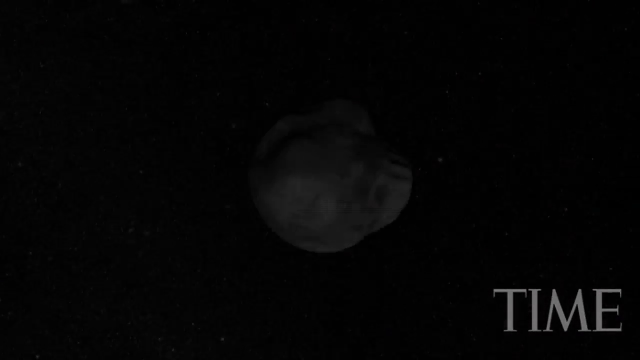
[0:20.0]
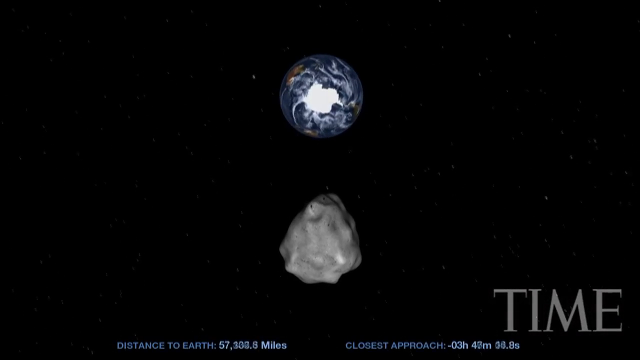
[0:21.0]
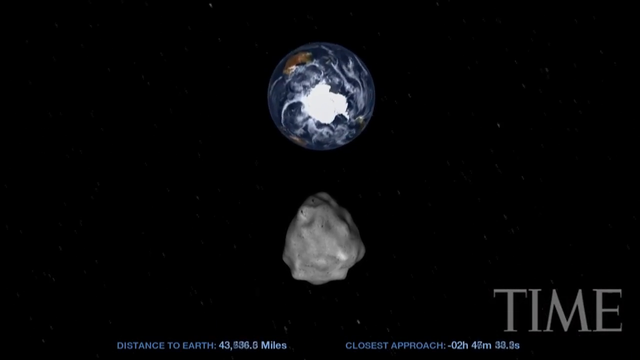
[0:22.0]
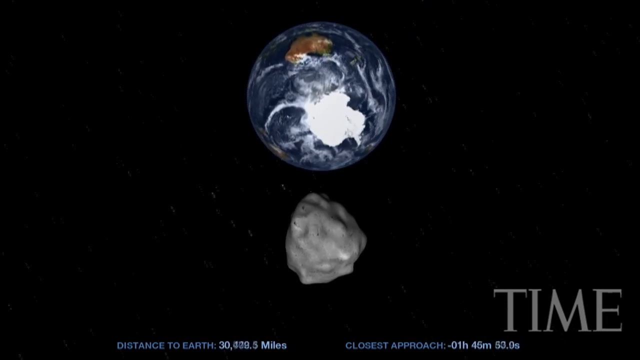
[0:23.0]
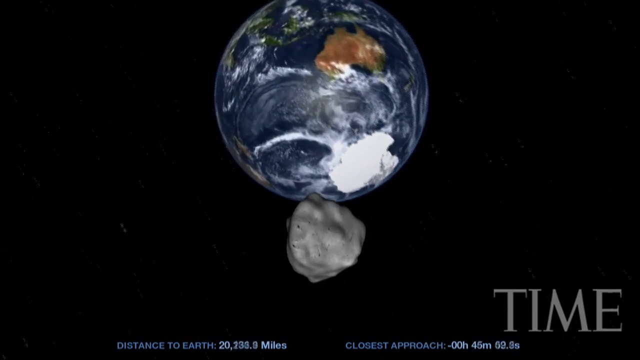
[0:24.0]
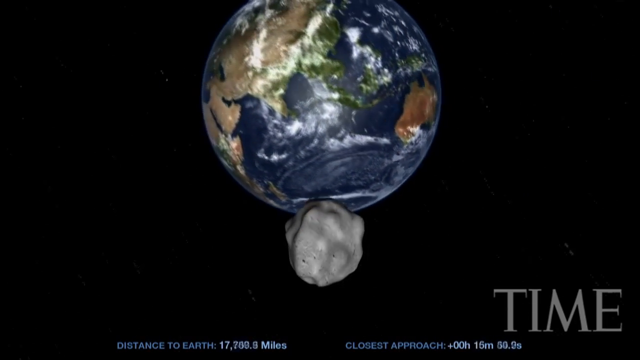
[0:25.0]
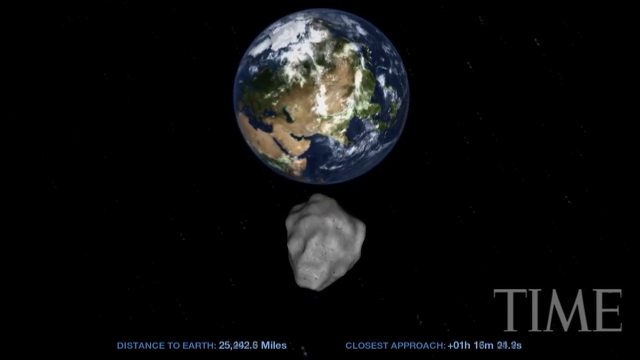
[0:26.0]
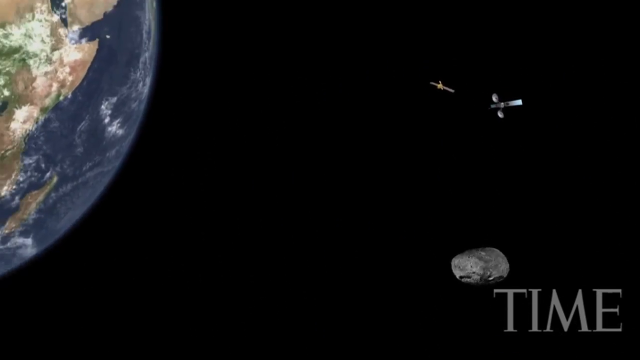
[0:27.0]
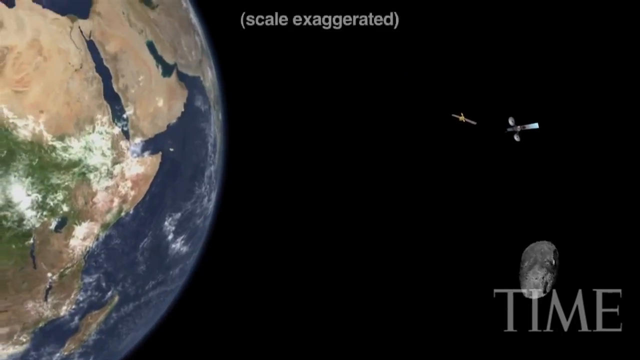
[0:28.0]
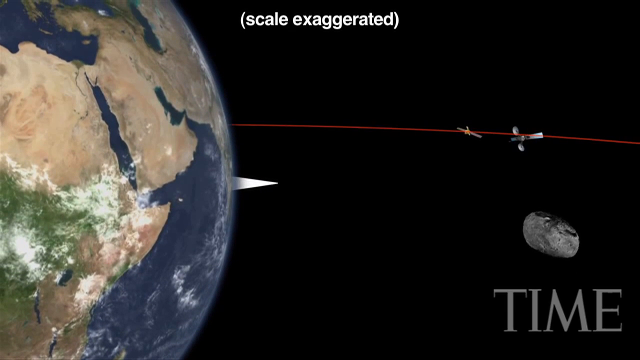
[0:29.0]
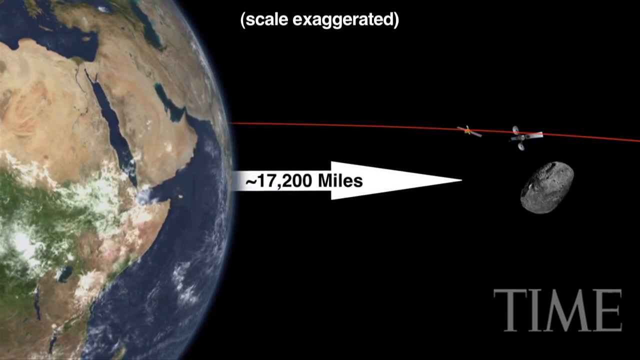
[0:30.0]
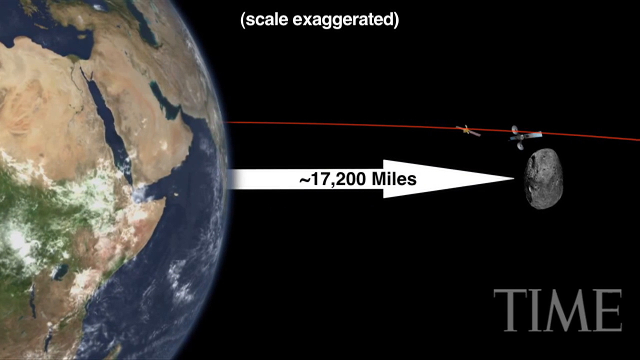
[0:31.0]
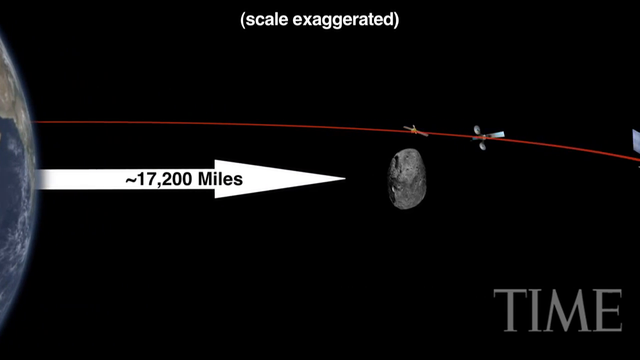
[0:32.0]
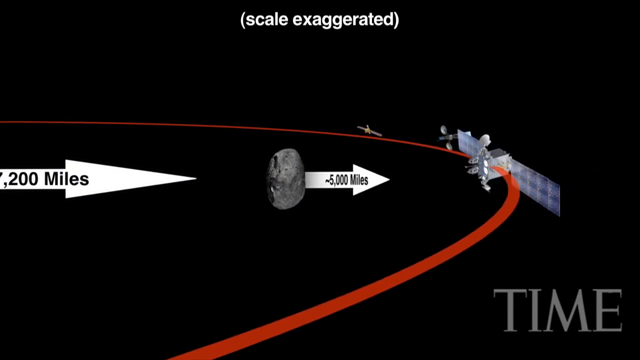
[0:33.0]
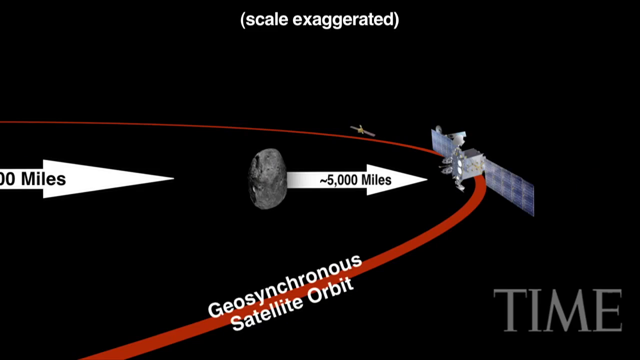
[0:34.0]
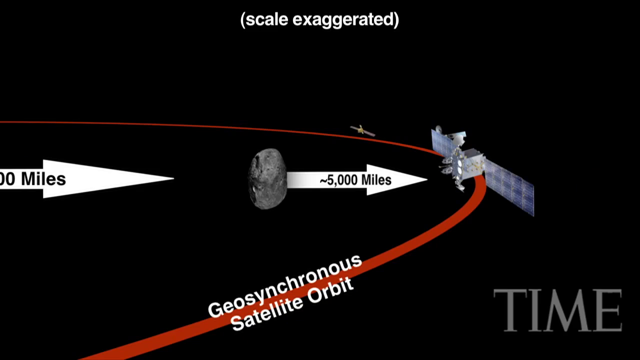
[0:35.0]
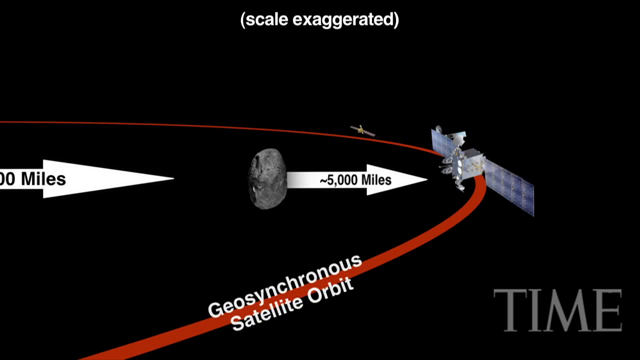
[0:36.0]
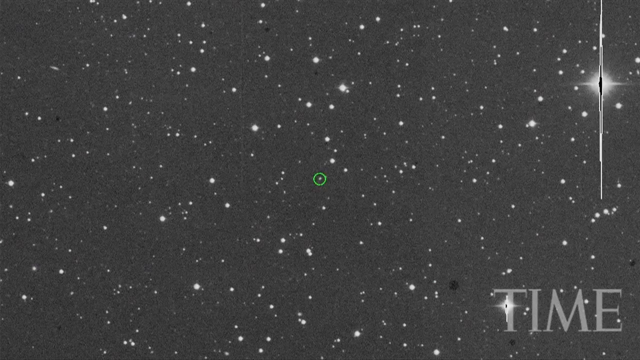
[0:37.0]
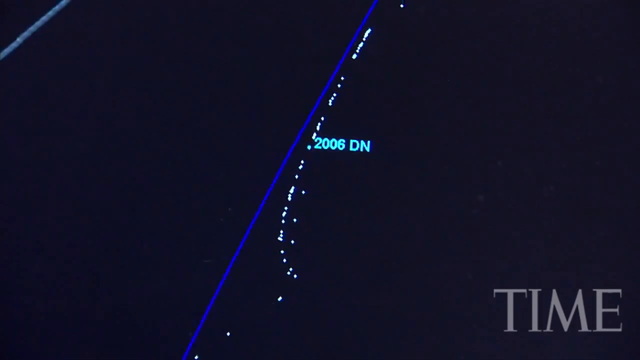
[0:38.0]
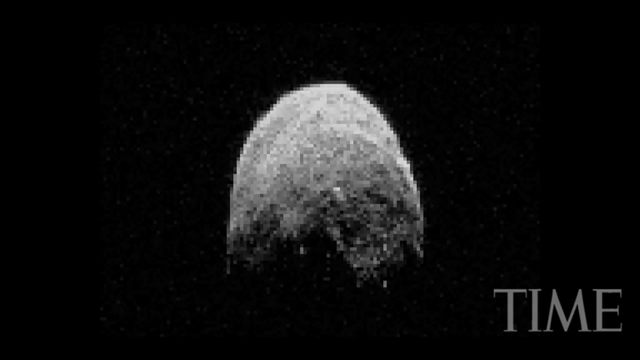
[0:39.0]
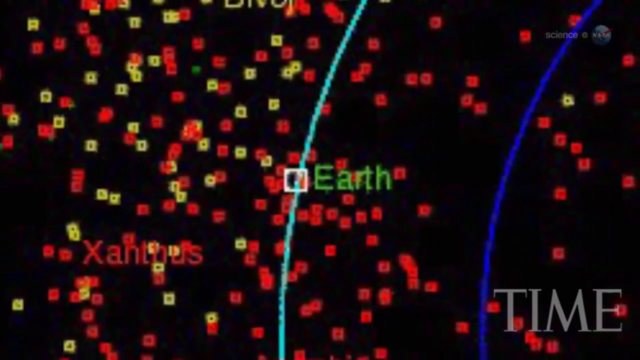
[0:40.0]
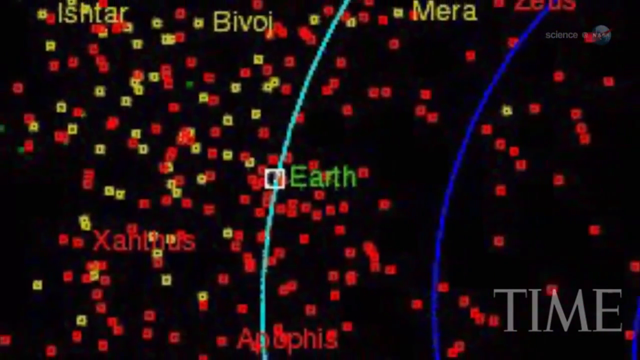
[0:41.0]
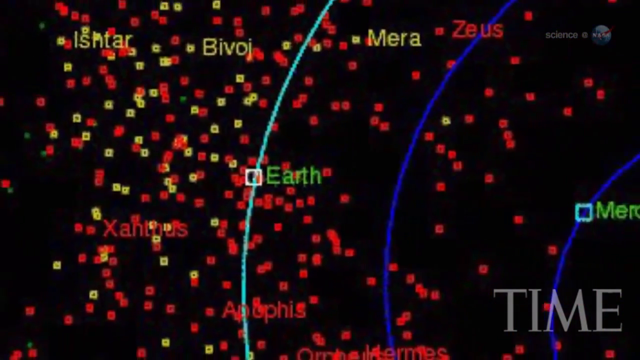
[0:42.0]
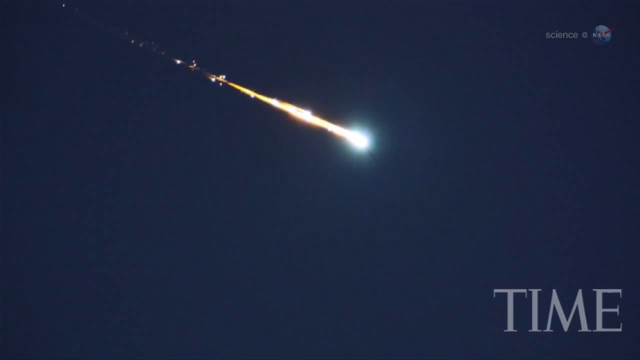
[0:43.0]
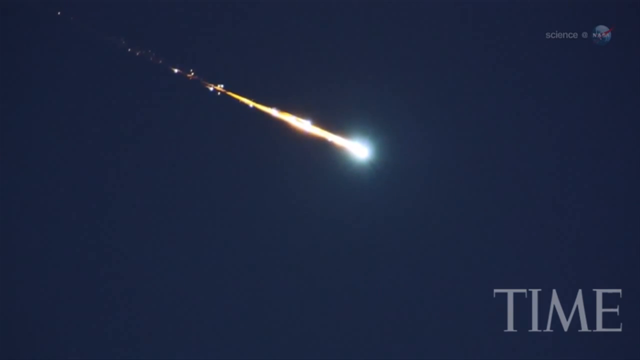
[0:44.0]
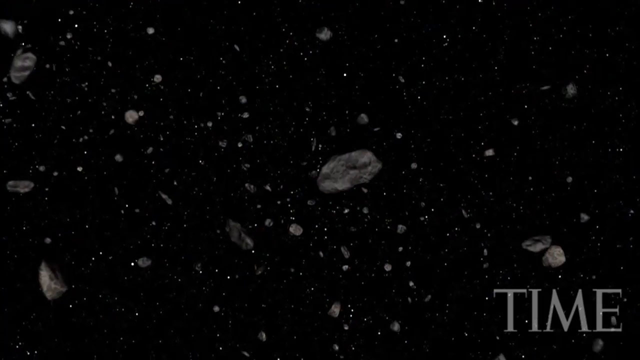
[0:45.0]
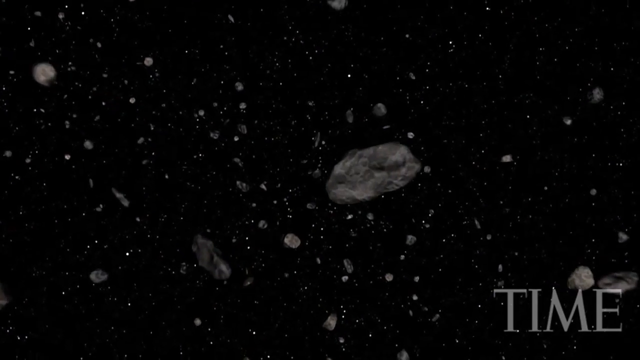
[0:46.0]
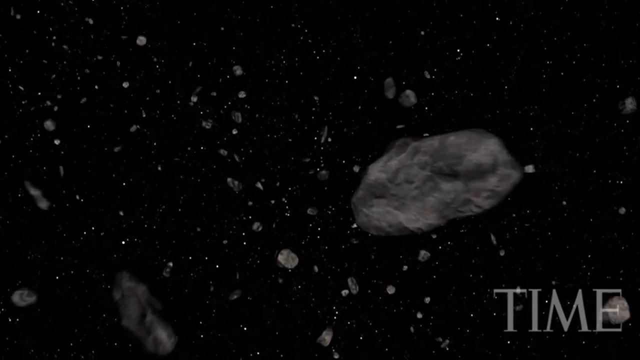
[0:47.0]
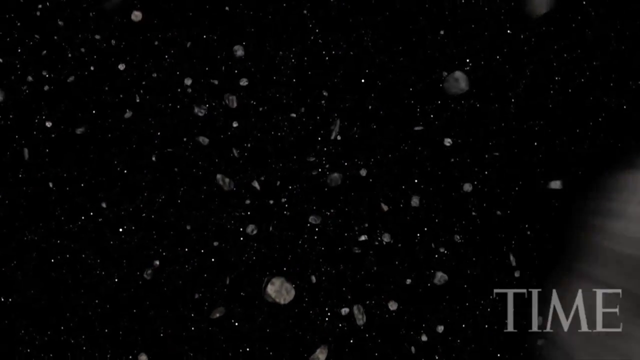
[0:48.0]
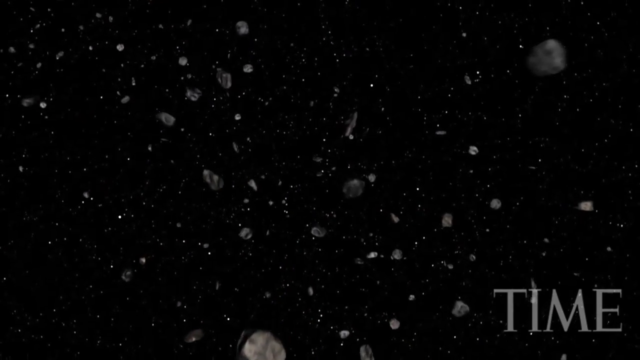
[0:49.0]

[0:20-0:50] An asteroid flies through space and approaches the Earth. The asteroid is at the bottom, slowly spinning counterclockwise in something like a backwards spin, while the Earth rotates clockwise. As the asteroid approaches, the video transitions to show that the asteroid is actually very much smaller in scale than the Earth. Different scenes follow of asteroids spinning through space, and of an asteroid falling toward Earth from the upper left of the screen down toward the right. Then there are scenes of millions of asteroids, small and large, floating in space.